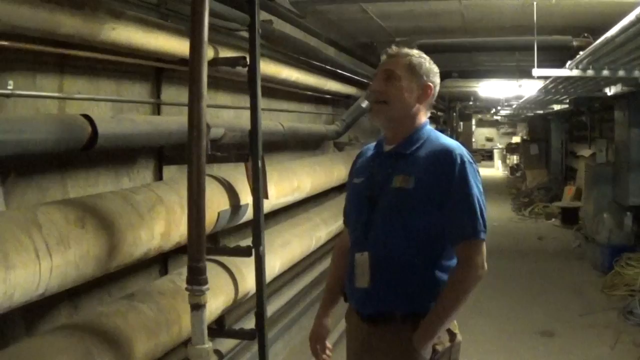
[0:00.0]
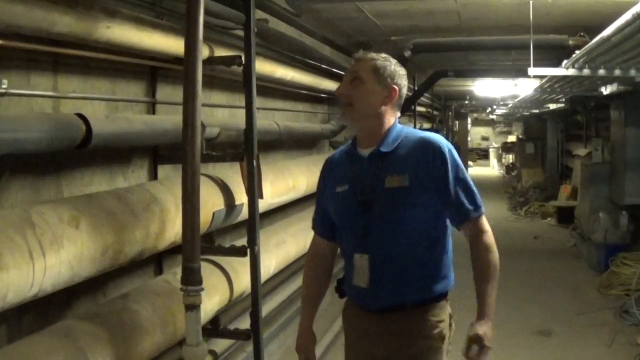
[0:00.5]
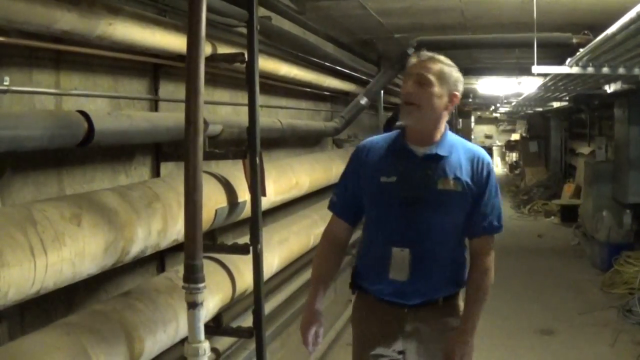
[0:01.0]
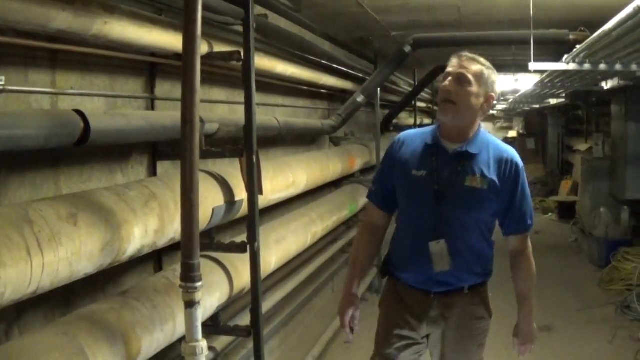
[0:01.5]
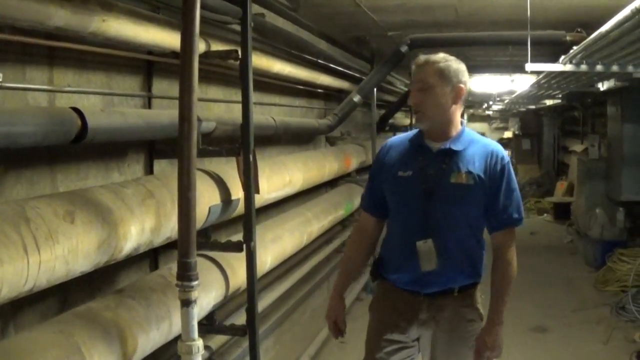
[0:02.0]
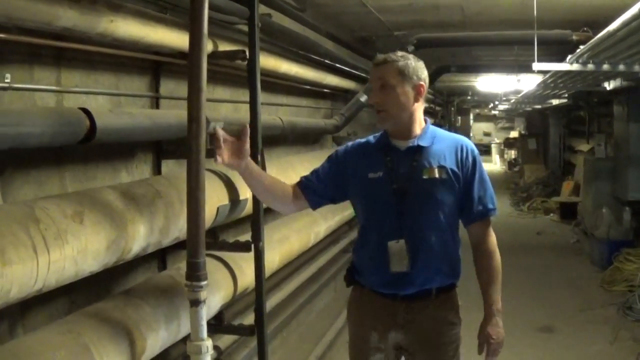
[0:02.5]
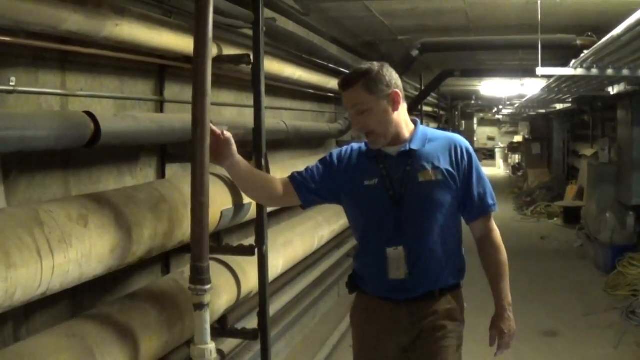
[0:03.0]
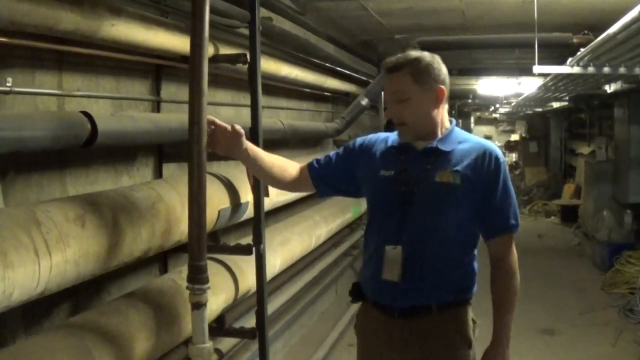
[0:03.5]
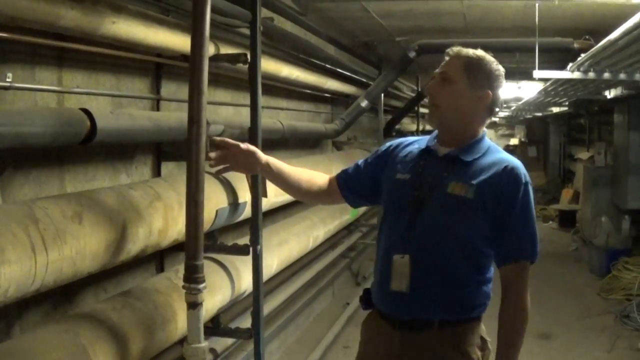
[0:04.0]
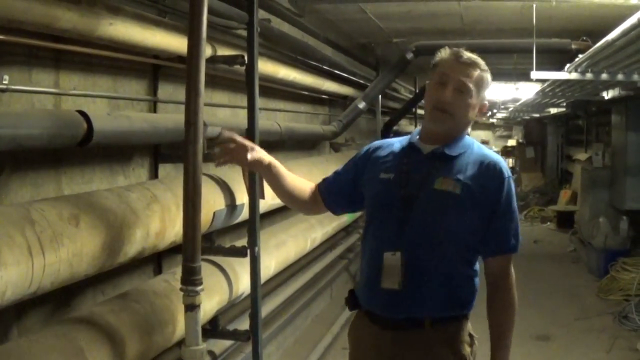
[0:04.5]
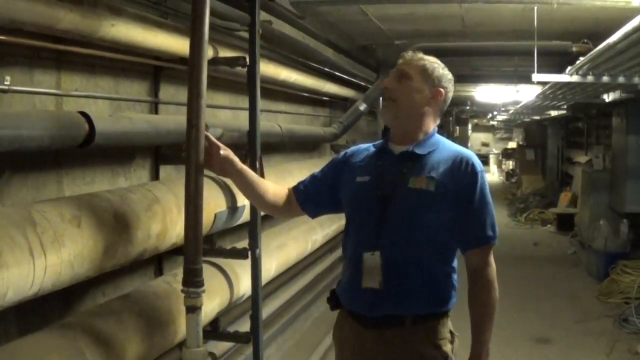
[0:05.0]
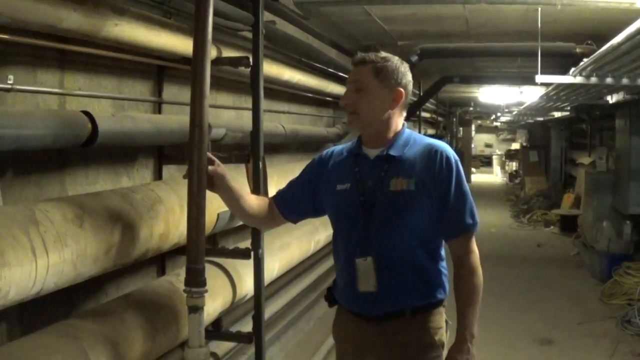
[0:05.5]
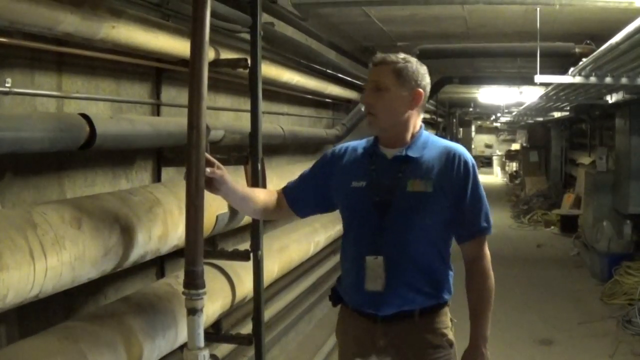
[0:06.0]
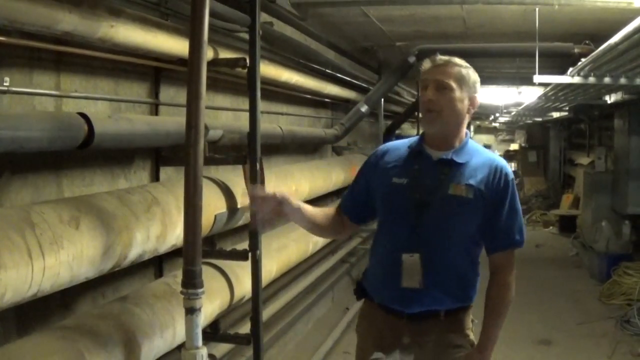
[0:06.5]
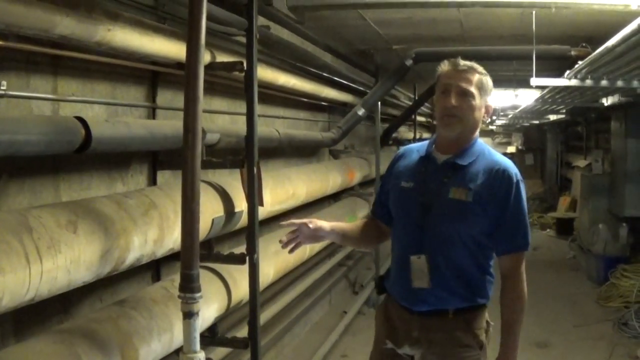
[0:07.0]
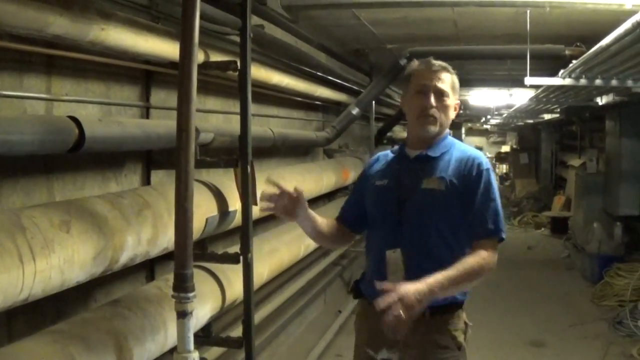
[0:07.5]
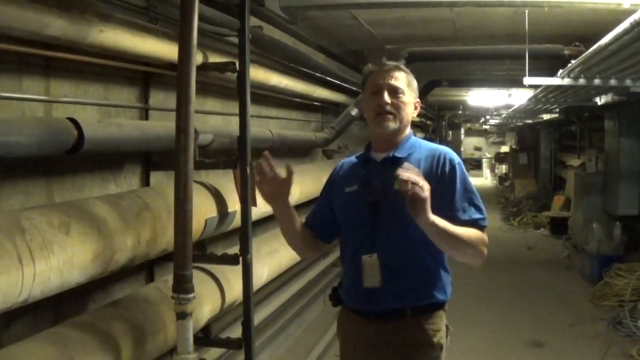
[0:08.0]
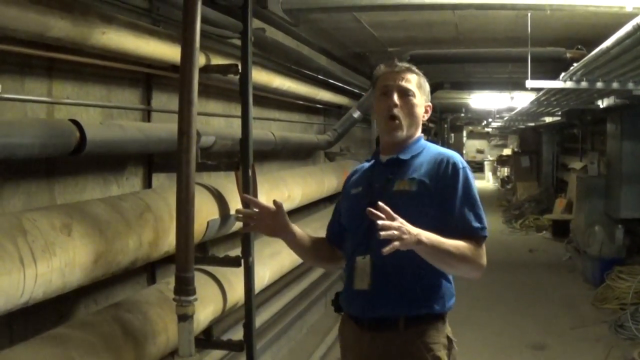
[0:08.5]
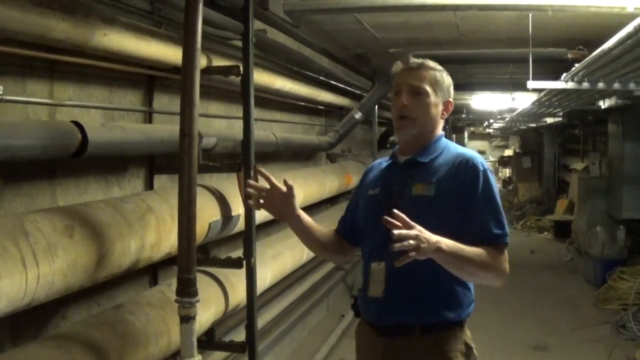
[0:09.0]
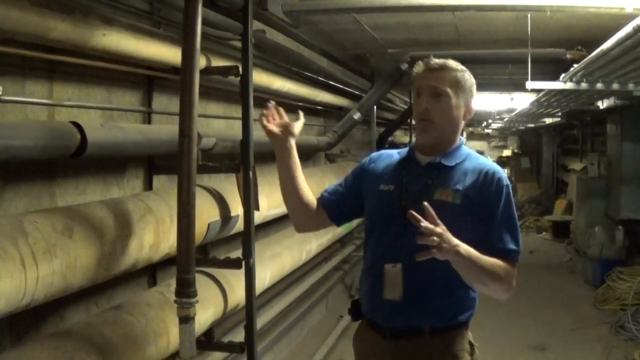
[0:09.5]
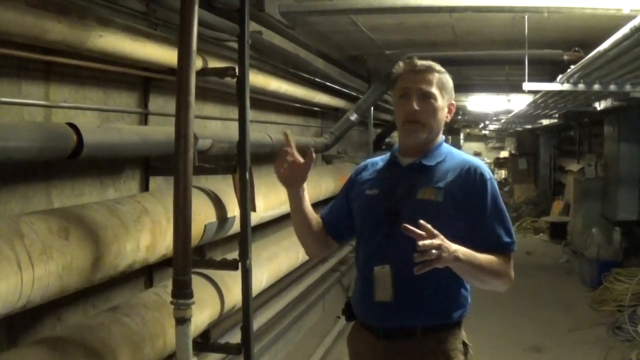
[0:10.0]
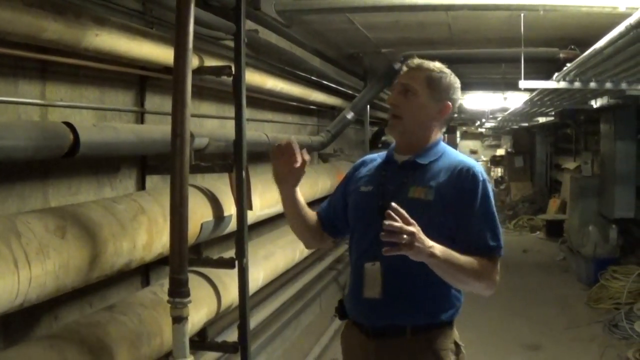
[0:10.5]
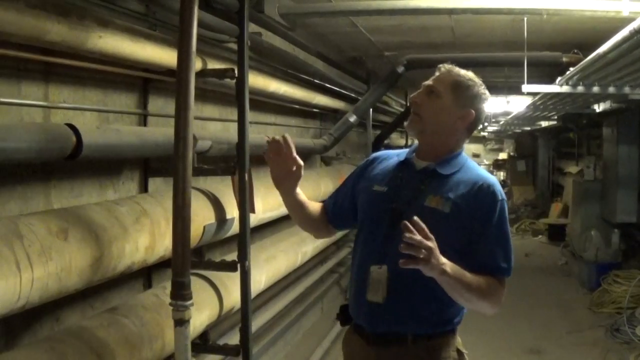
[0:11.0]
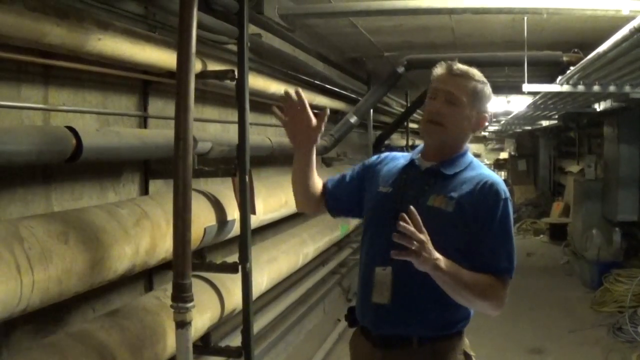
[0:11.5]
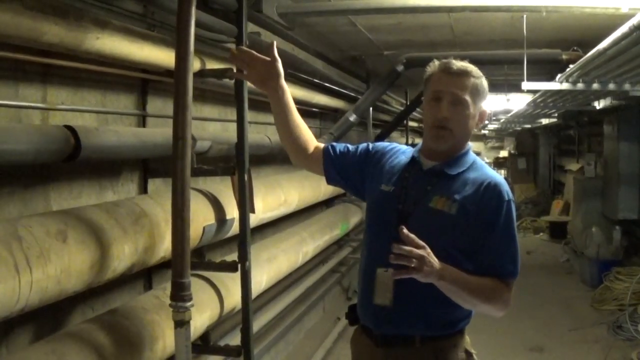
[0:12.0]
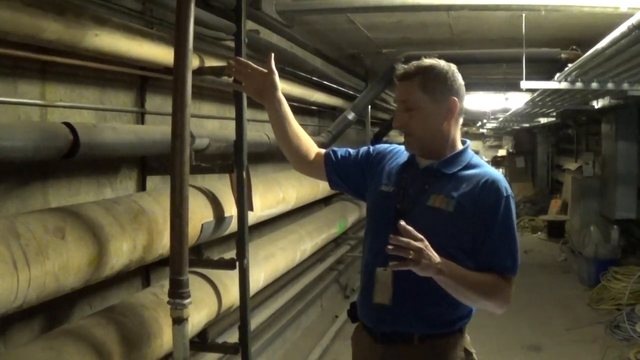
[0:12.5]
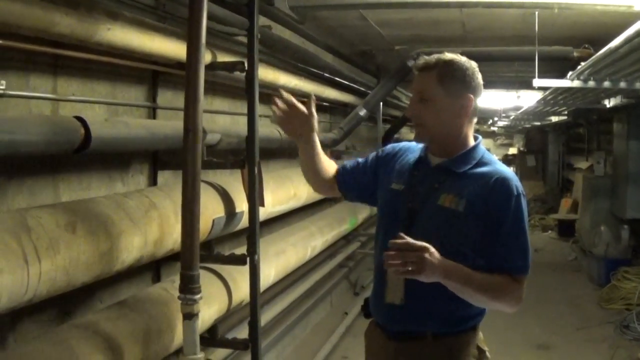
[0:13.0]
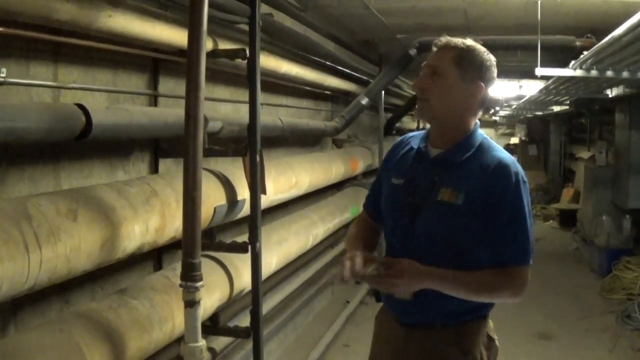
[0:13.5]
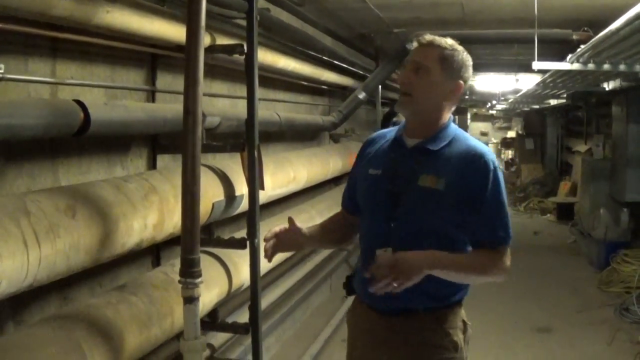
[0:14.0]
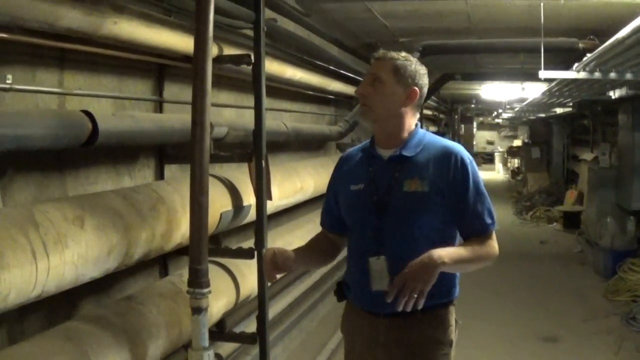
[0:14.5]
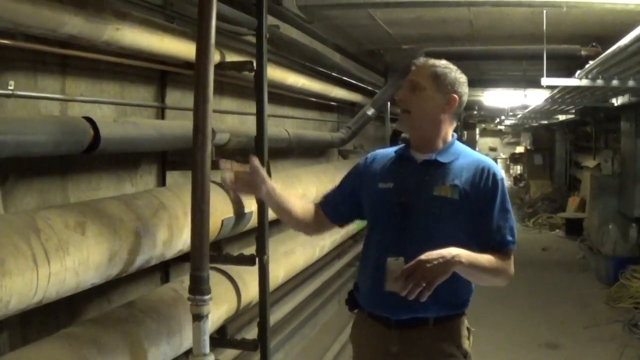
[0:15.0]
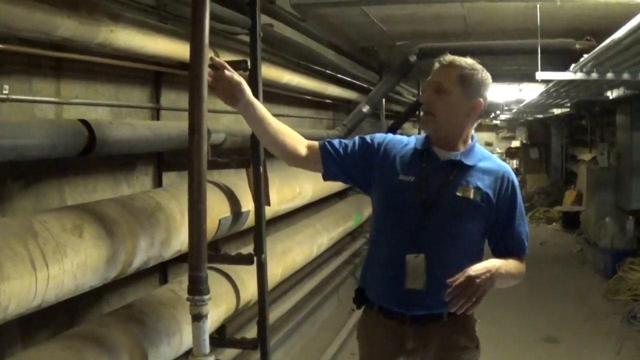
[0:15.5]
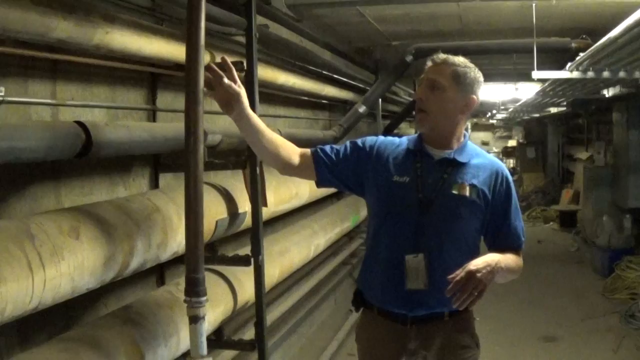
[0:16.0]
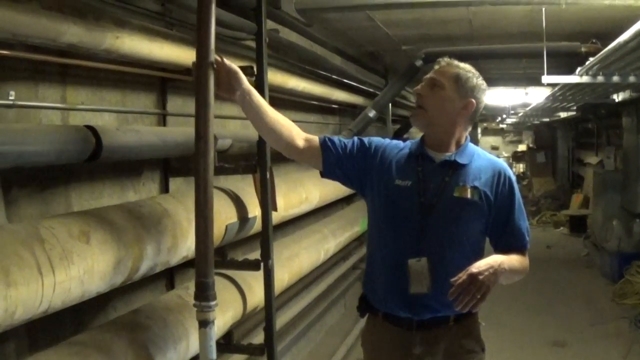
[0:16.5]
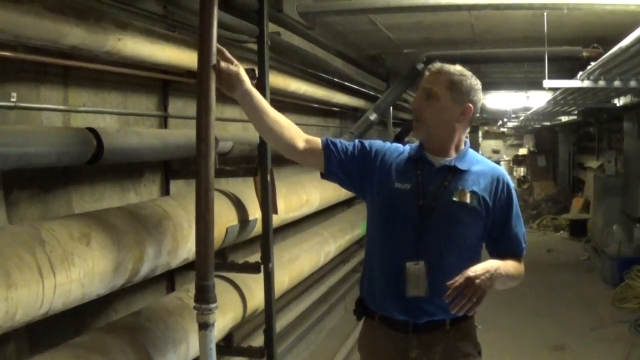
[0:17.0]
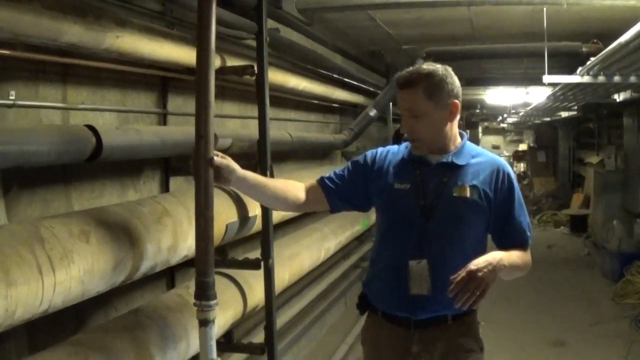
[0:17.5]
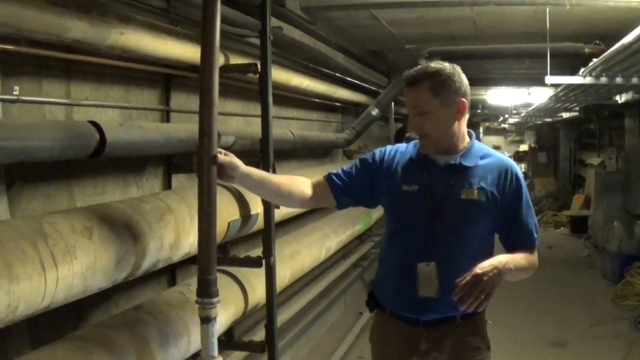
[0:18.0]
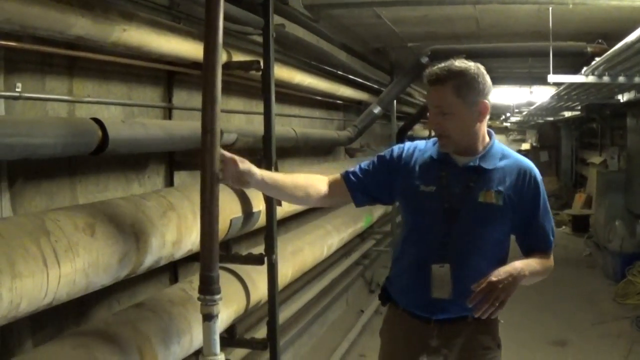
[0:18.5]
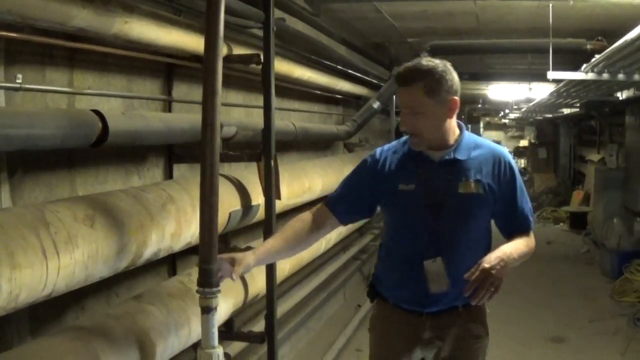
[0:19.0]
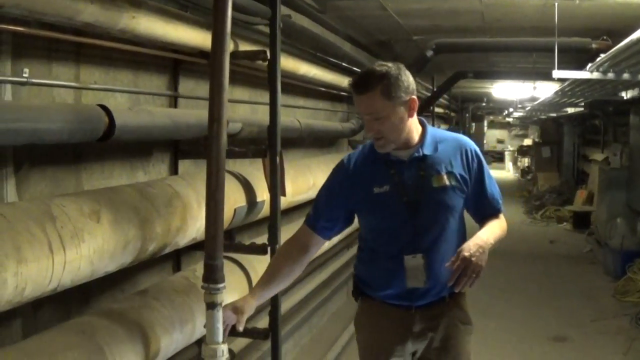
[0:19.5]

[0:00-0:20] A single man wearing a blue t-shirt, a badge hanging at his neck and khaki trousers is in an underground tunnel or a building with pipes. The pipes are brownish or yellowish in color. He touches the pipes with his right hand and points at them as he talks. In the background, white light shines from a bulb, and other things are there that cannot be made out. The man touches the pipes, looks at the camera, then looks at the pipes as if trying to communicate something, then uses both hands to explain. The pipes look like water or gas pipes, or pipes carrying something.